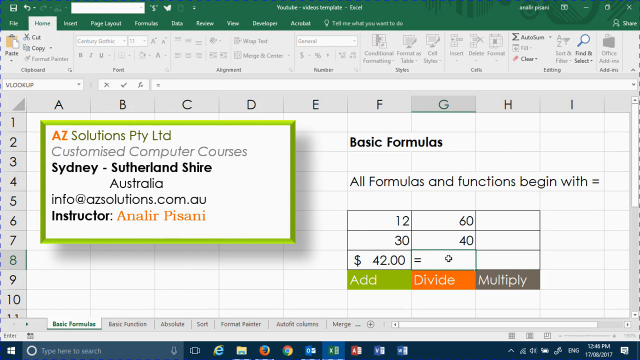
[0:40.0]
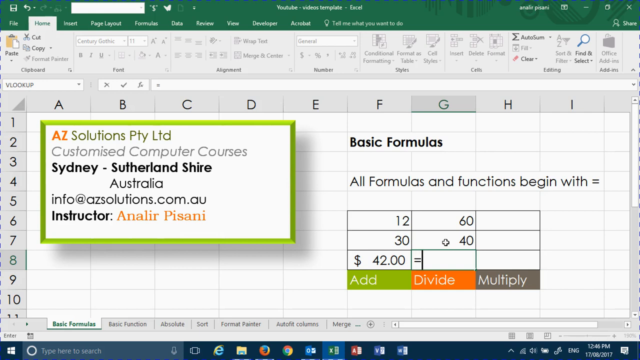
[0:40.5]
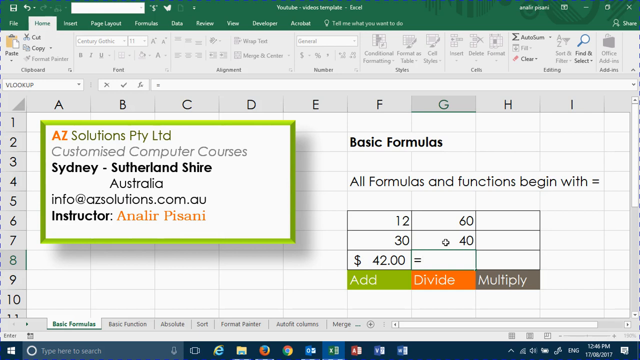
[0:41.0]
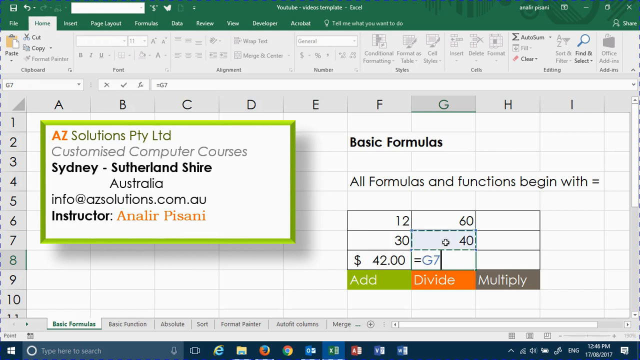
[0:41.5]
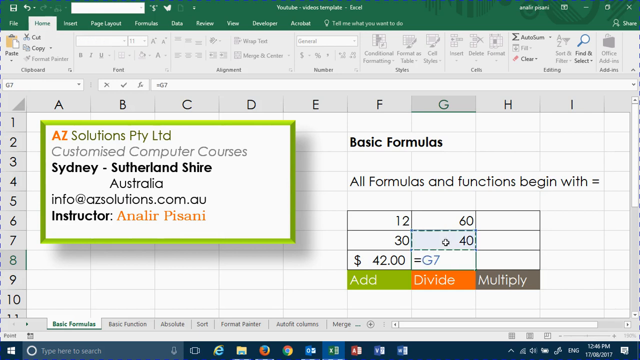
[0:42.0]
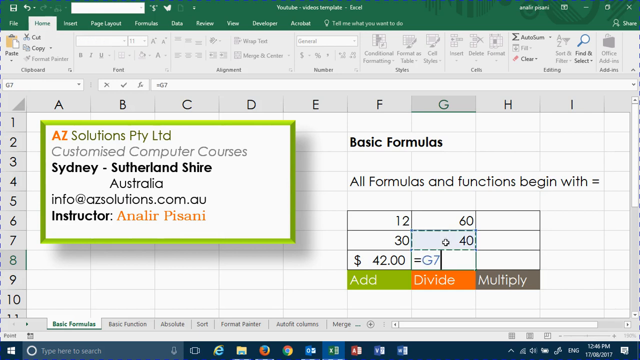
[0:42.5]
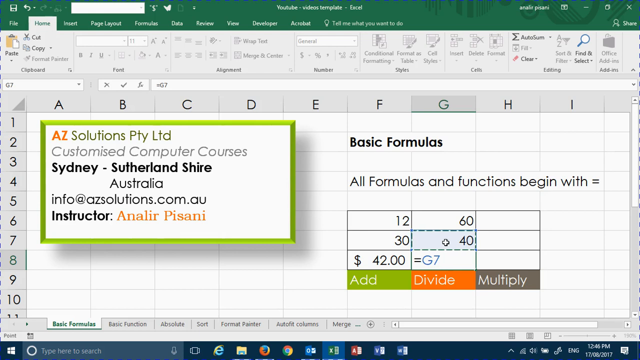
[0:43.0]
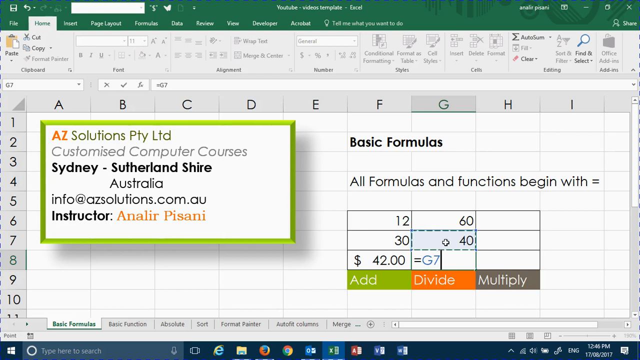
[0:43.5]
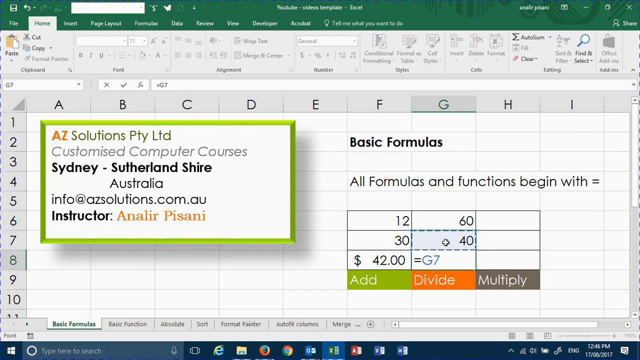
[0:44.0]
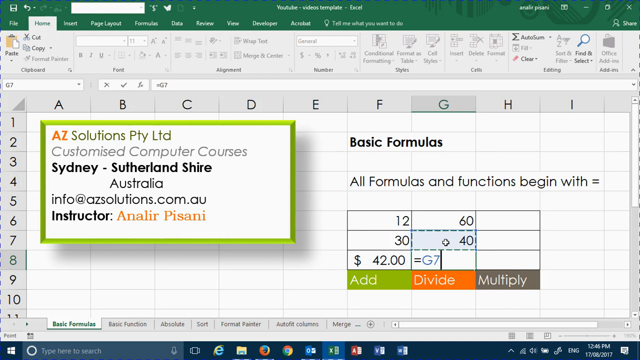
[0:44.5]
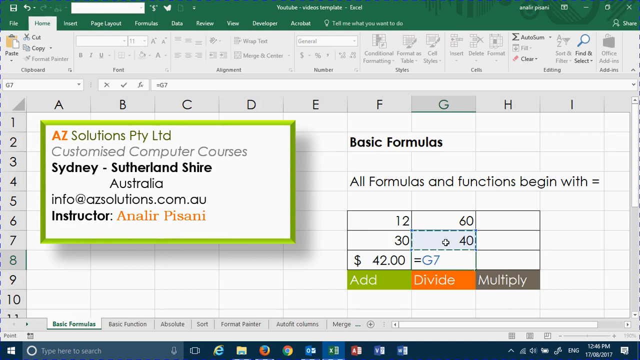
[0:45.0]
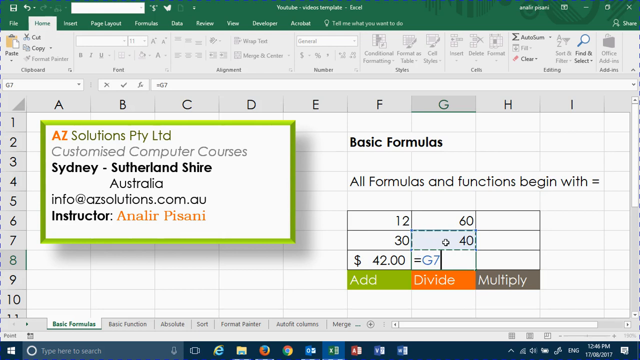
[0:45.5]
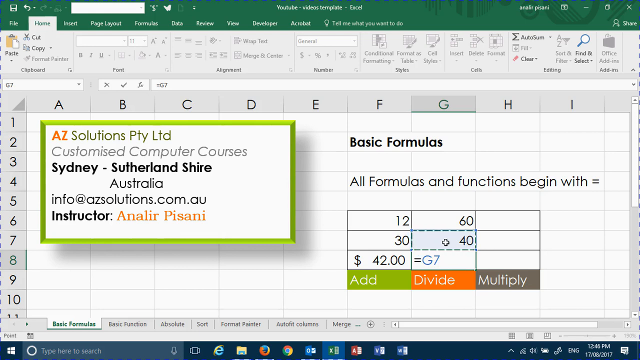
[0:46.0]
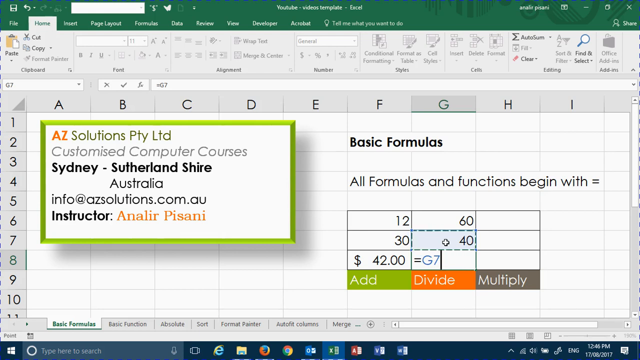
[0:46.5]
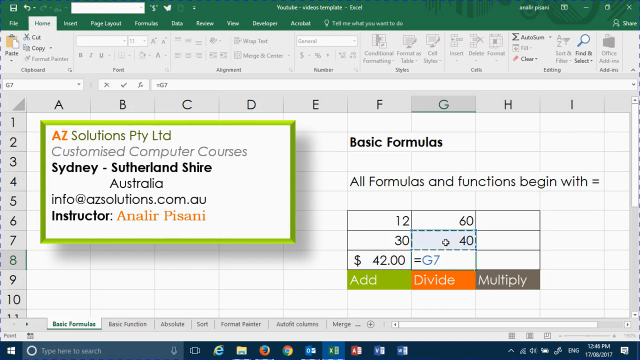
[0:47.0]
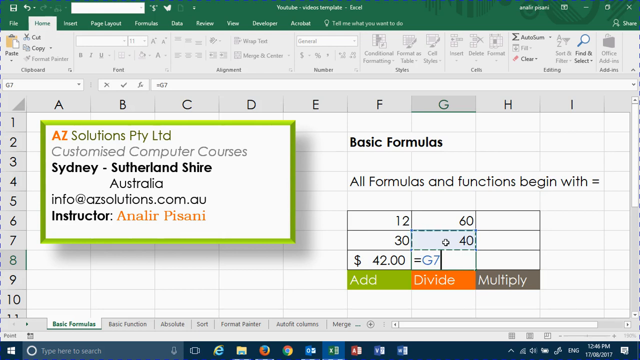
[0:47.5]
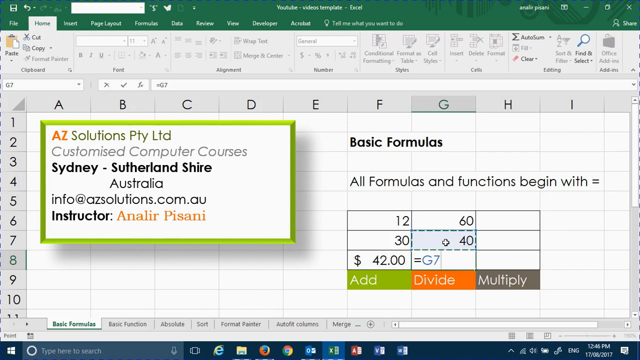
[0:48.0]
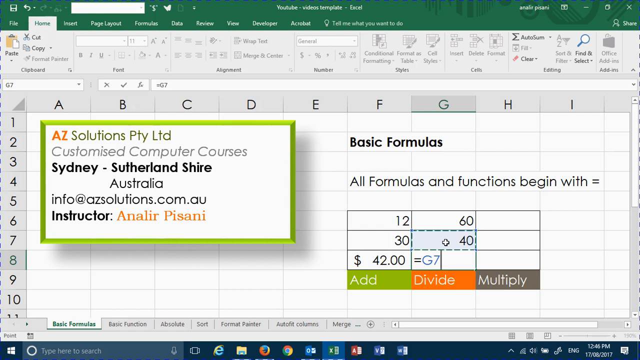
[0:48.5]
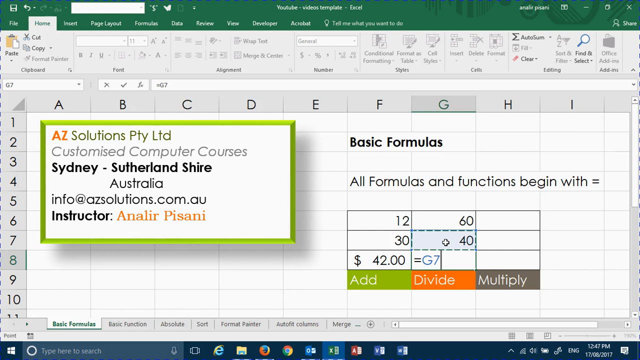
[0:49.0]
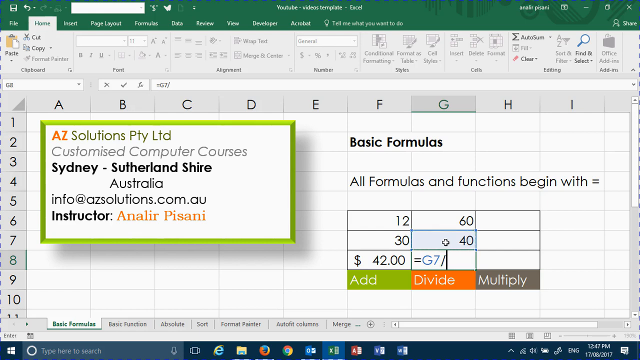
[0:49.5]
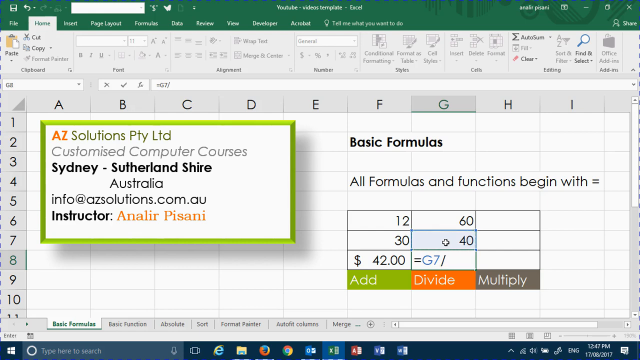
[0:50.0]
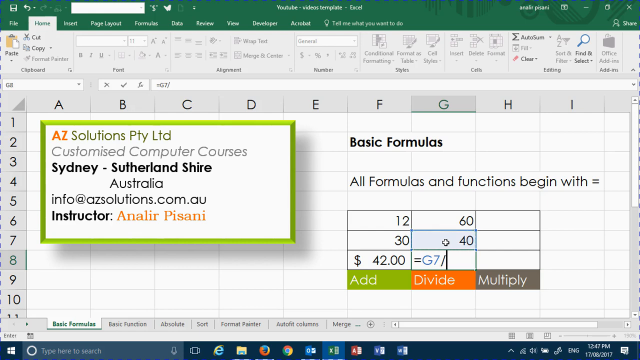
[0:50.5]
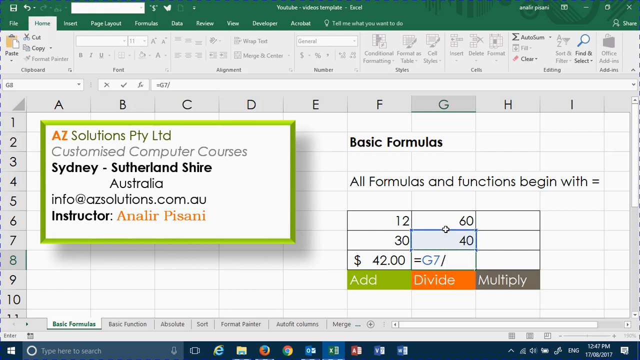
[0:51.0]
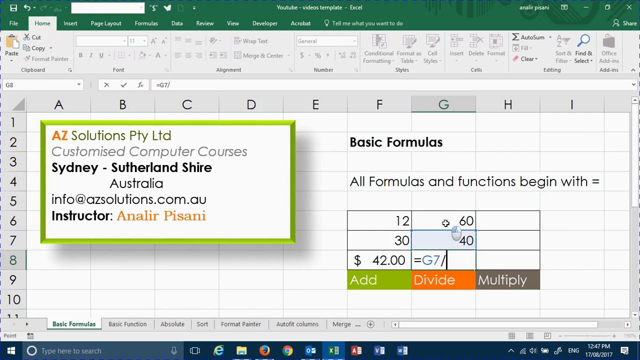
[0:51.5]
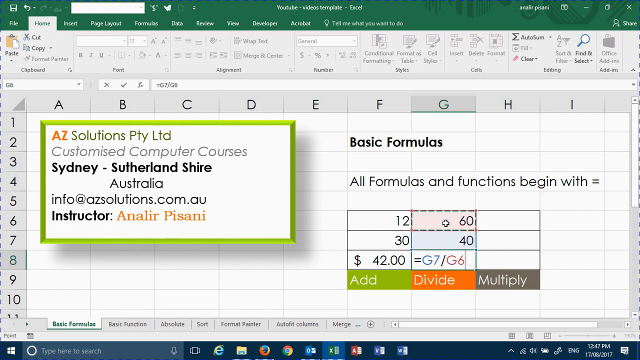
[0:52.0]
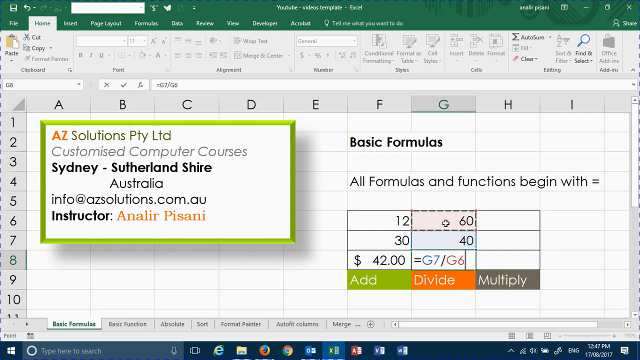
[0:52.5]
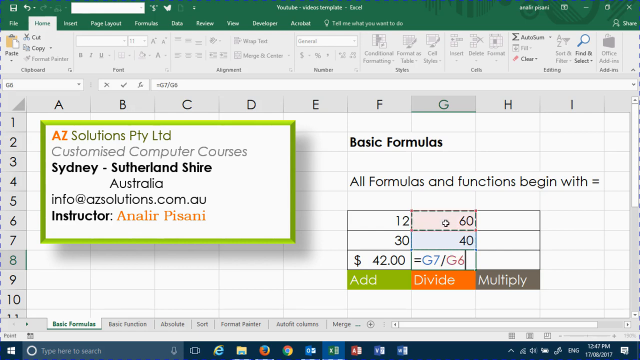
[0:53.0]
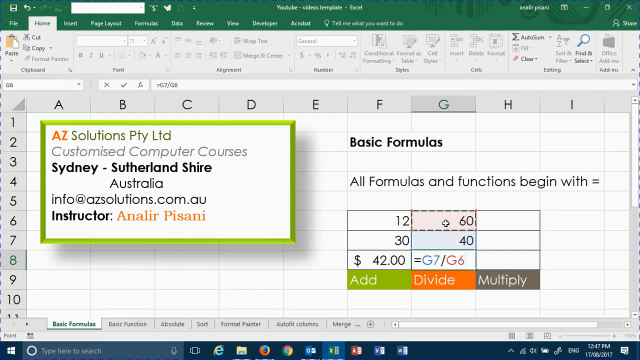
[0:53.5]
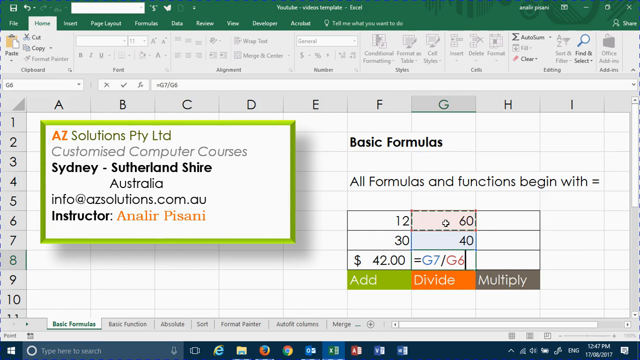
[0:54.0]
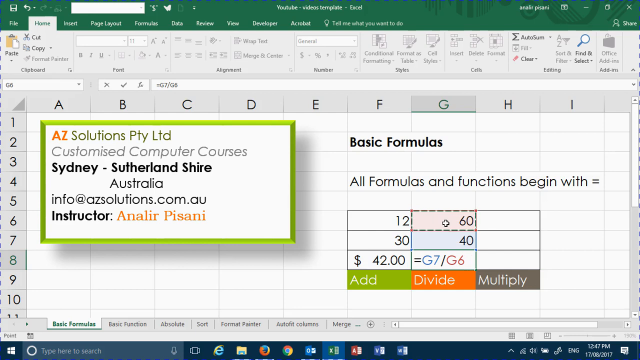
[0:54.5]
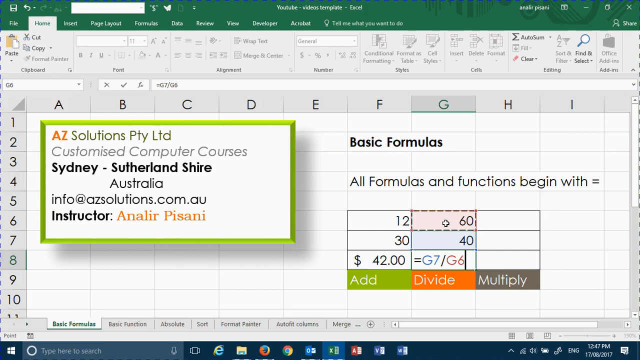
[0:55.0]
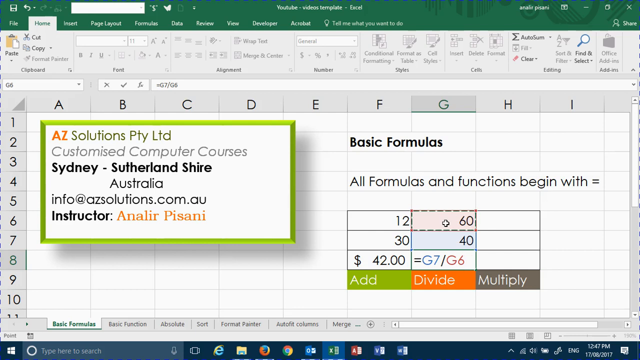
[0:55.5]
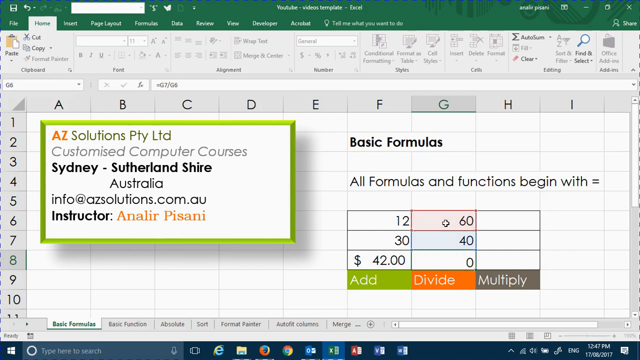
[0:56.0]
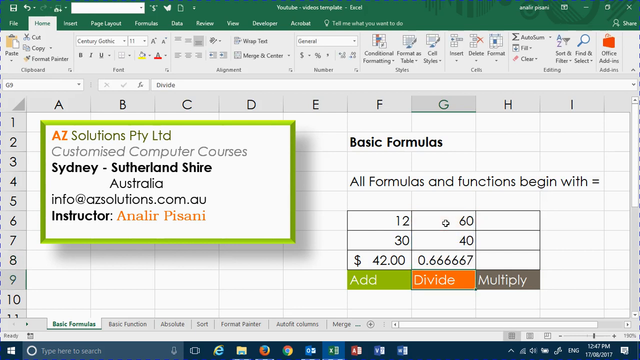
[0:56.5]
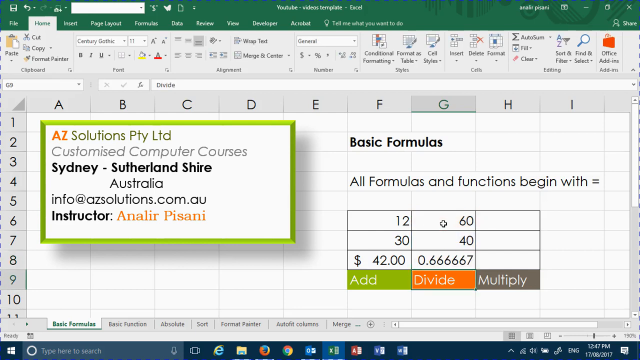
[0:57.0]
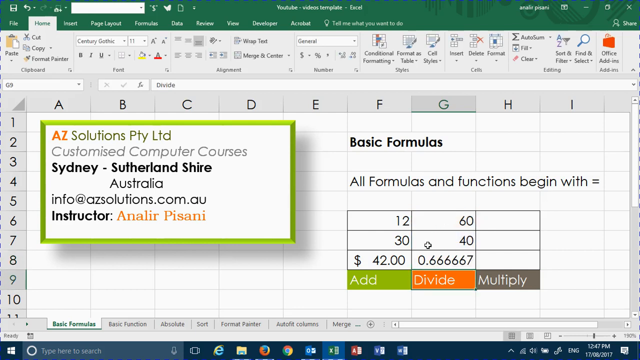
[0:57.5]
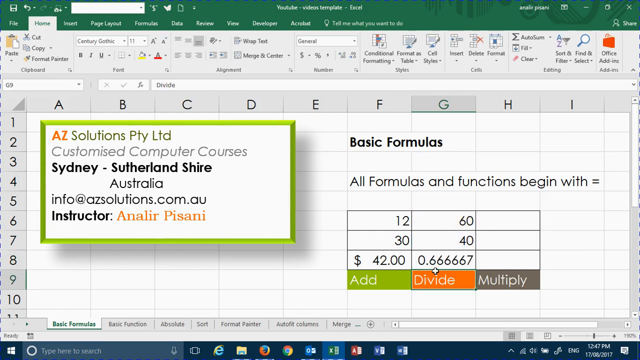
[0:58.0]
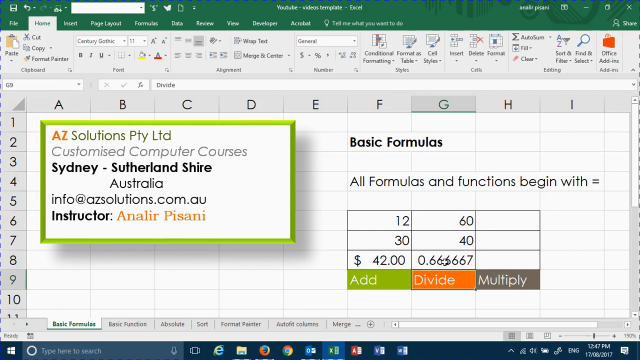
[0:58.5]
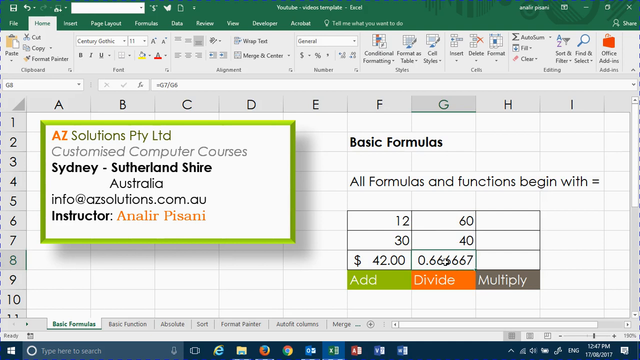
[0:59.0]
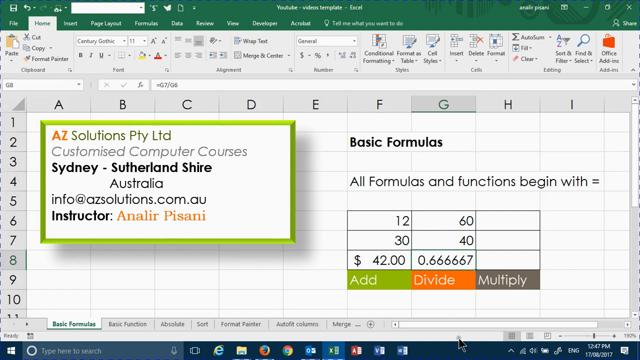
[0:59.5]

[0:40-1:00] After the equal sign, column G, row 7 is clicked and entered. There is a pause, and then a division sign is entered and G6 is clicked, so the formula shows the equal sign followed by G7, a division sign, and G6. Enter appears to be pressed, and the formula populates, outputting the result of dividing the two numbers.